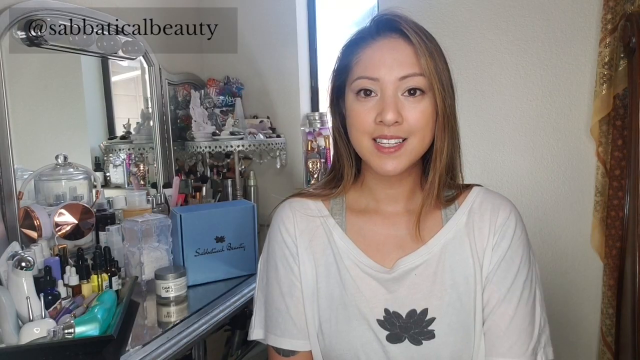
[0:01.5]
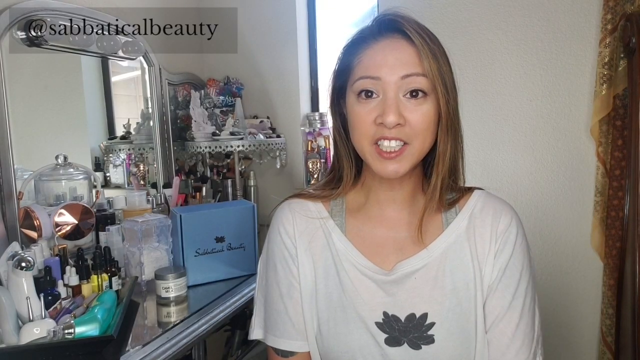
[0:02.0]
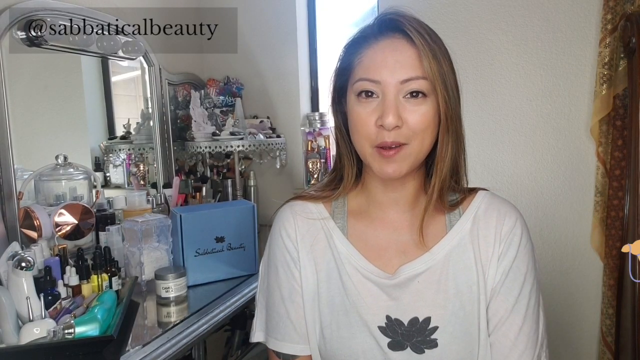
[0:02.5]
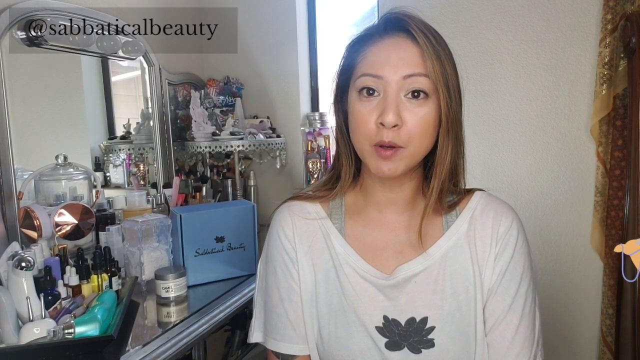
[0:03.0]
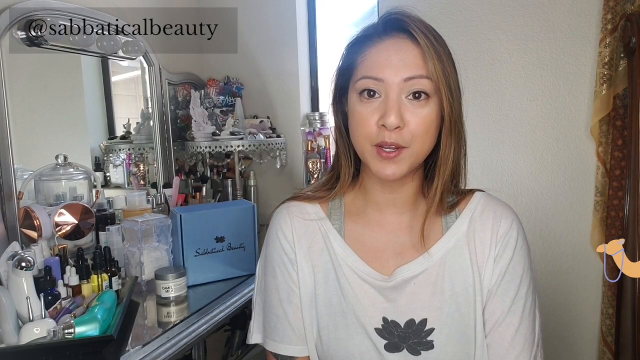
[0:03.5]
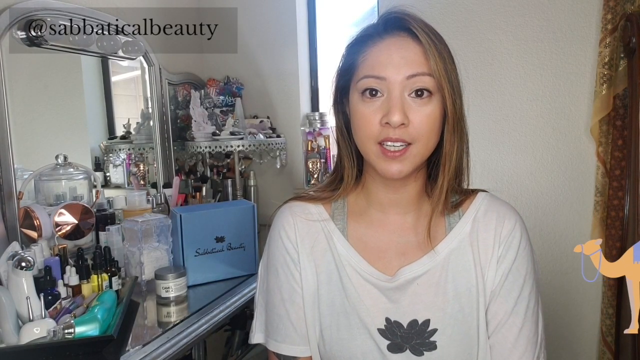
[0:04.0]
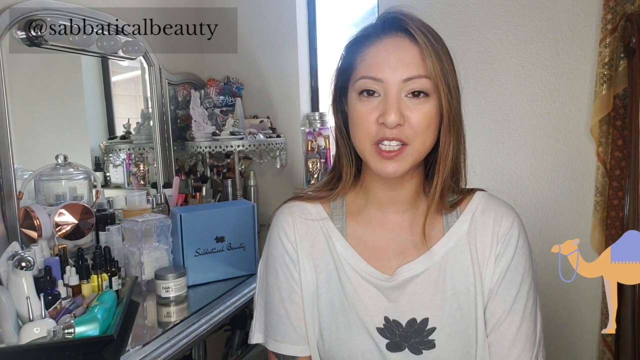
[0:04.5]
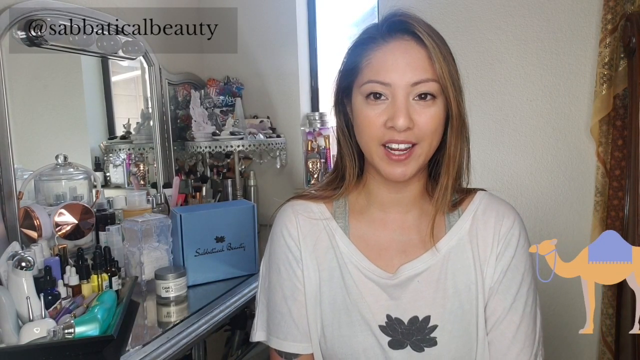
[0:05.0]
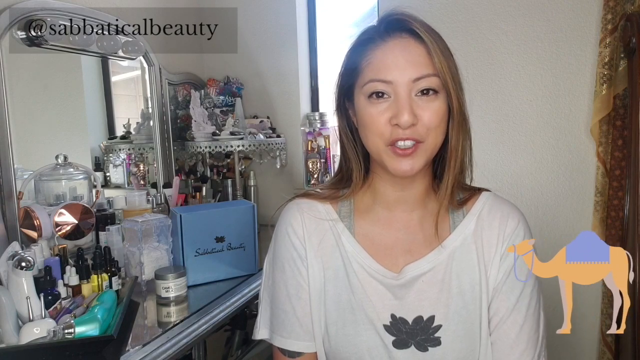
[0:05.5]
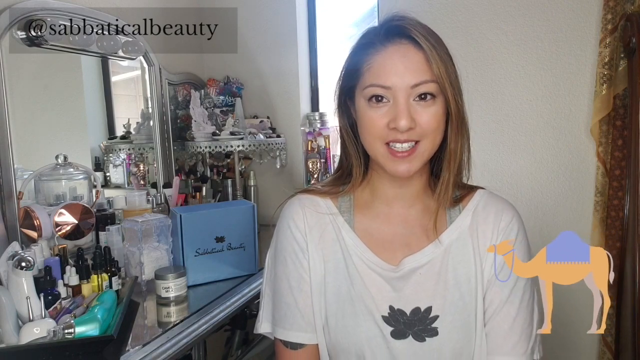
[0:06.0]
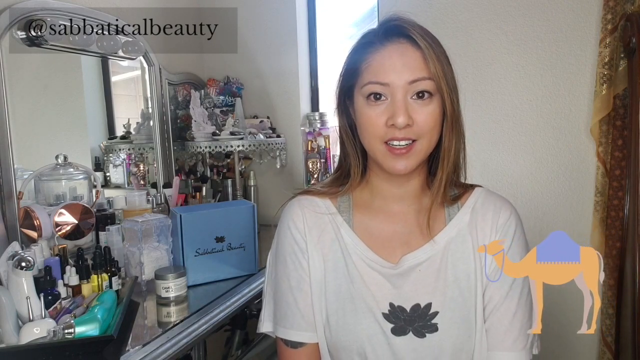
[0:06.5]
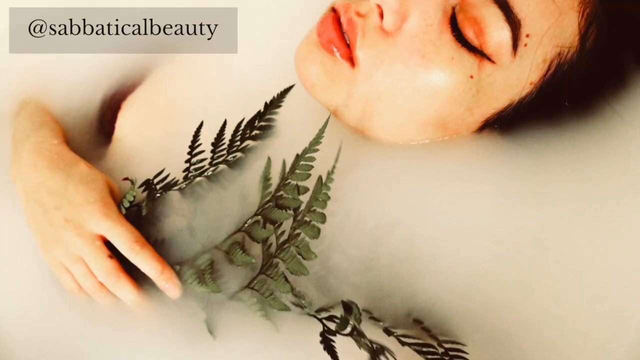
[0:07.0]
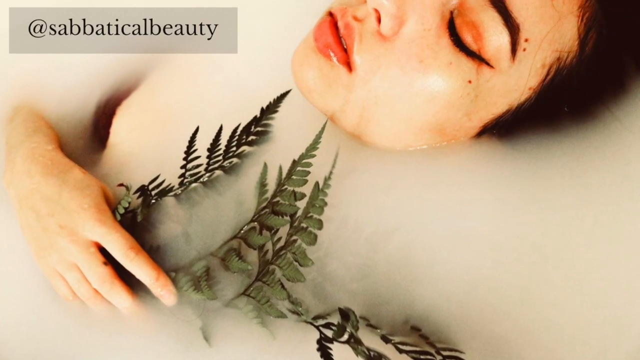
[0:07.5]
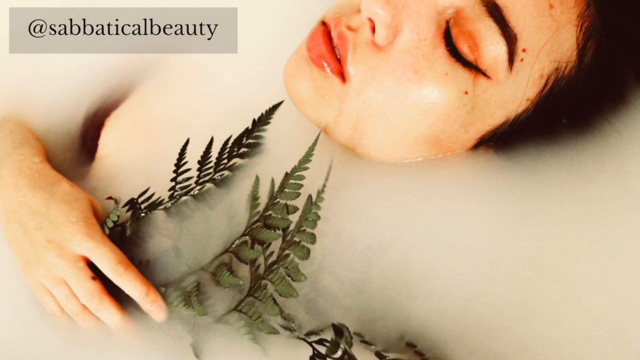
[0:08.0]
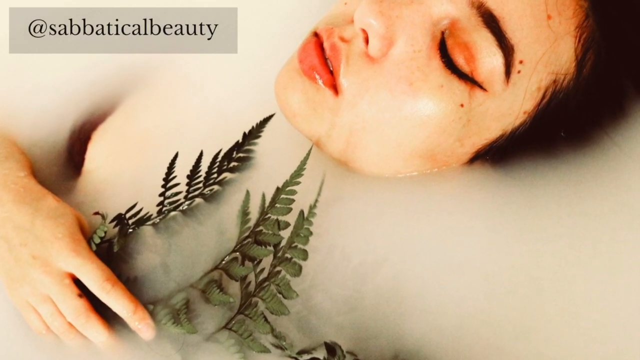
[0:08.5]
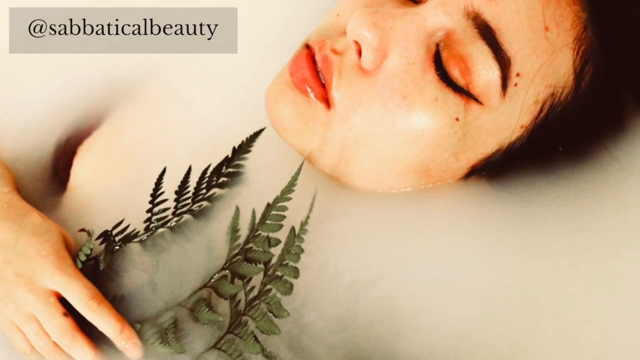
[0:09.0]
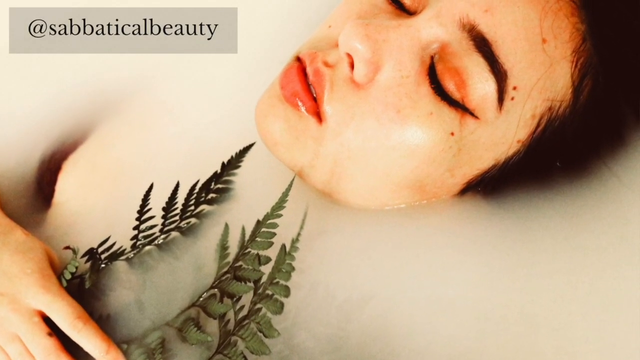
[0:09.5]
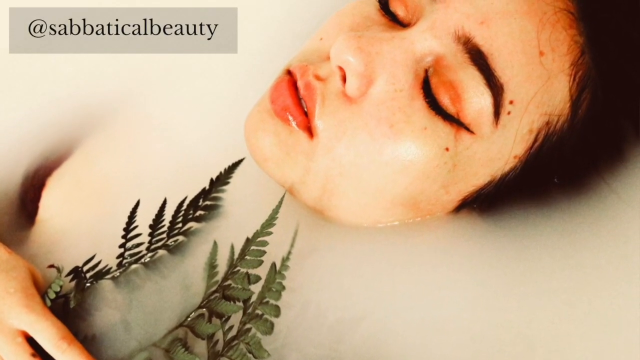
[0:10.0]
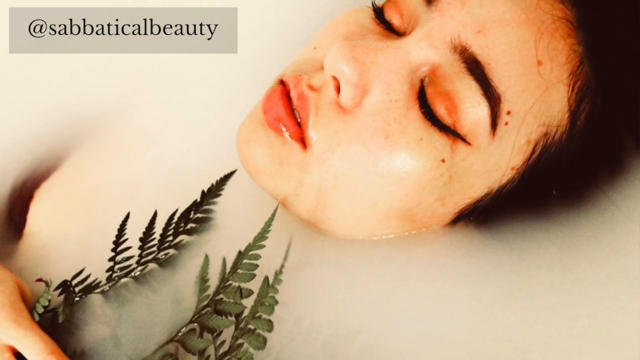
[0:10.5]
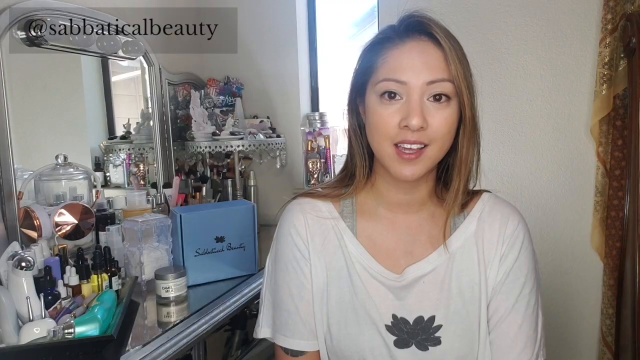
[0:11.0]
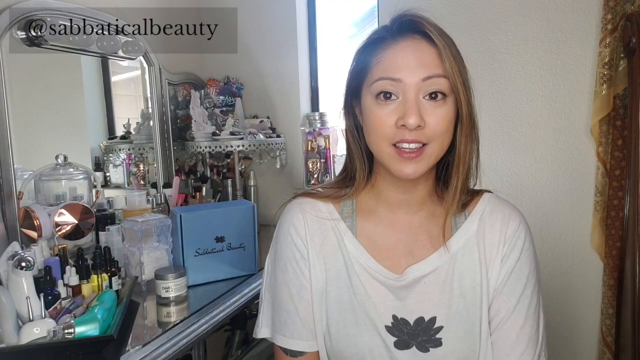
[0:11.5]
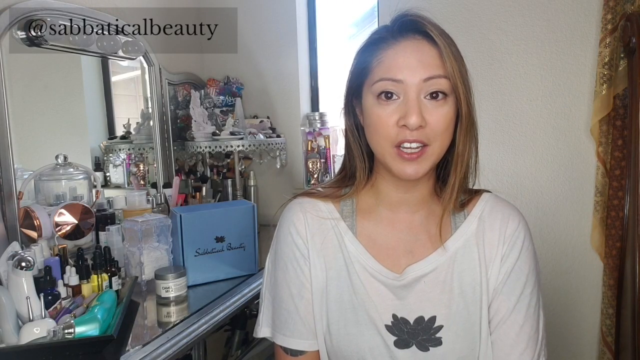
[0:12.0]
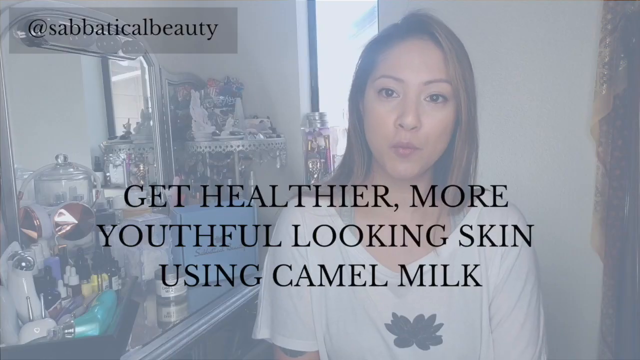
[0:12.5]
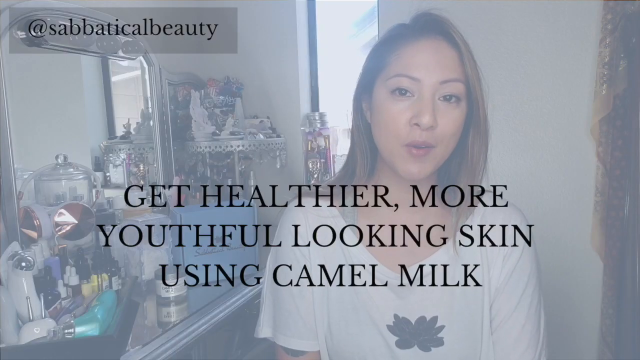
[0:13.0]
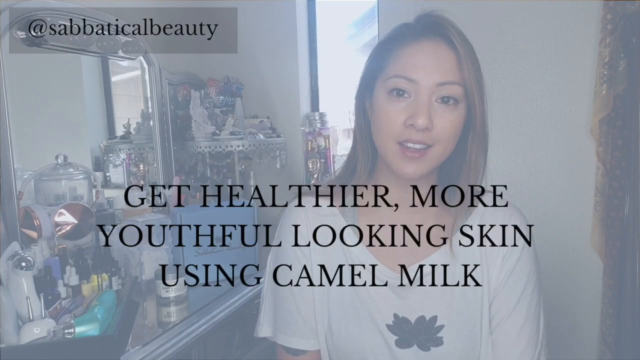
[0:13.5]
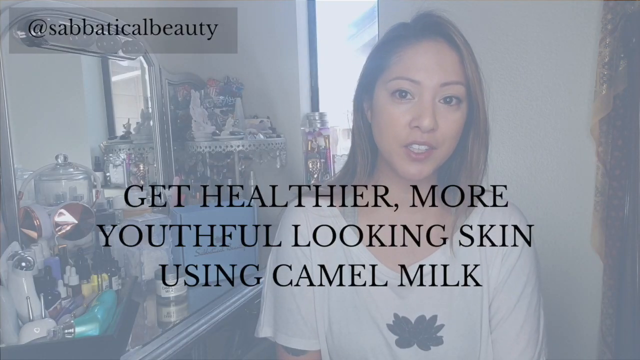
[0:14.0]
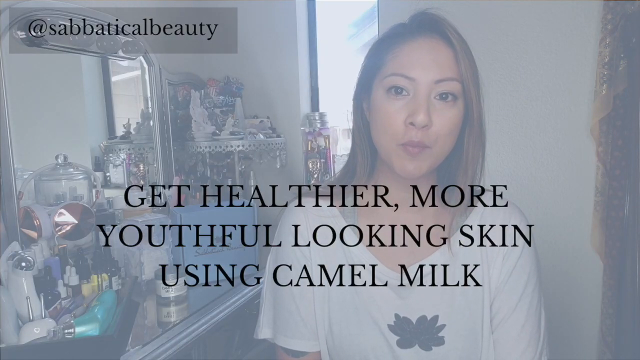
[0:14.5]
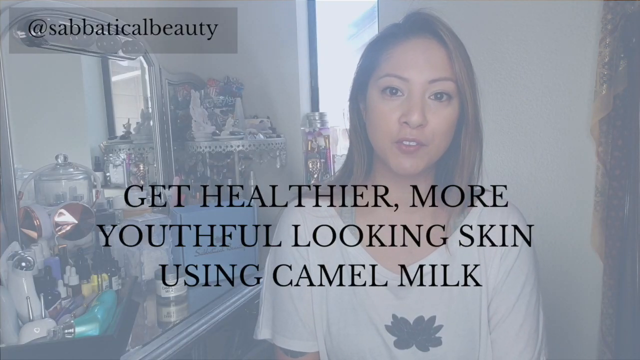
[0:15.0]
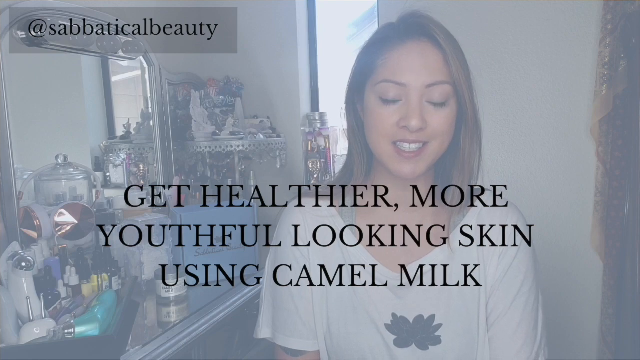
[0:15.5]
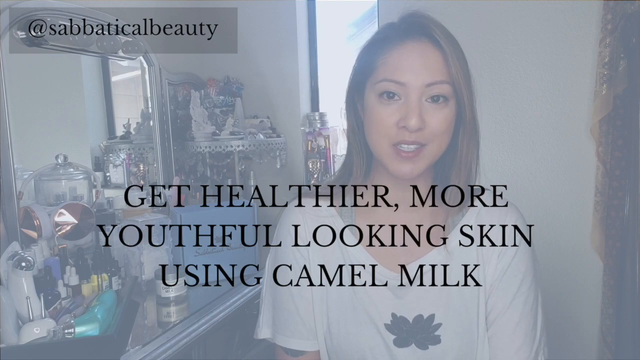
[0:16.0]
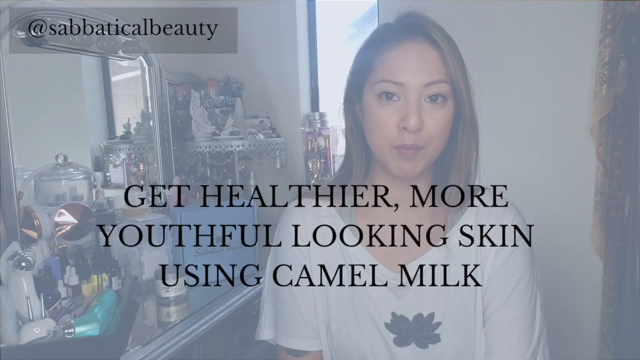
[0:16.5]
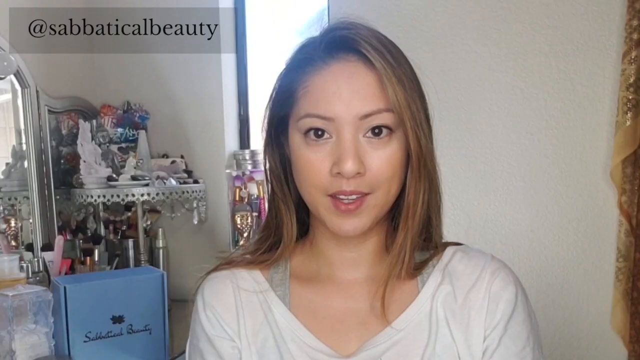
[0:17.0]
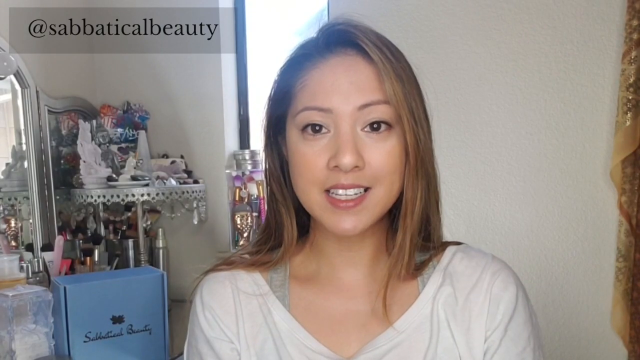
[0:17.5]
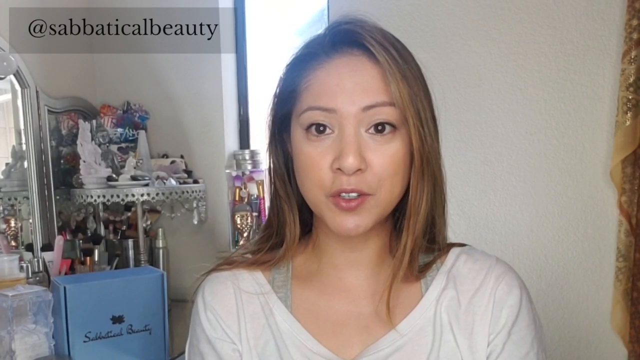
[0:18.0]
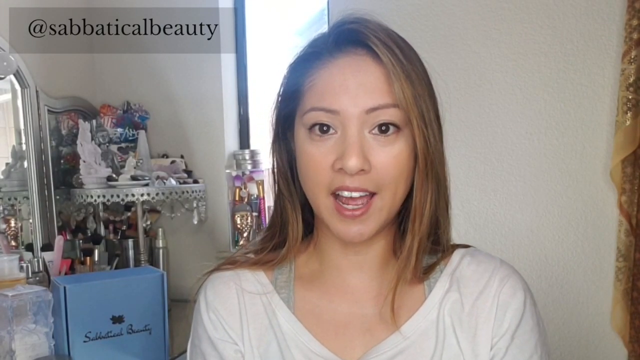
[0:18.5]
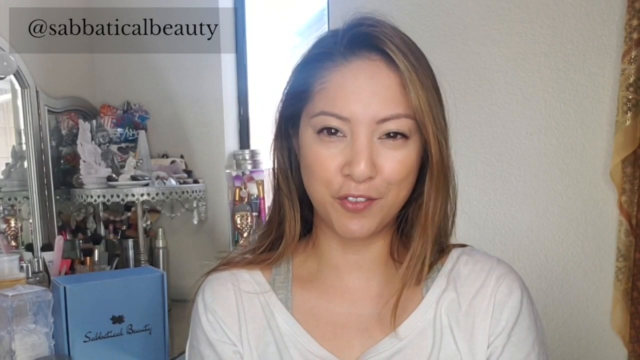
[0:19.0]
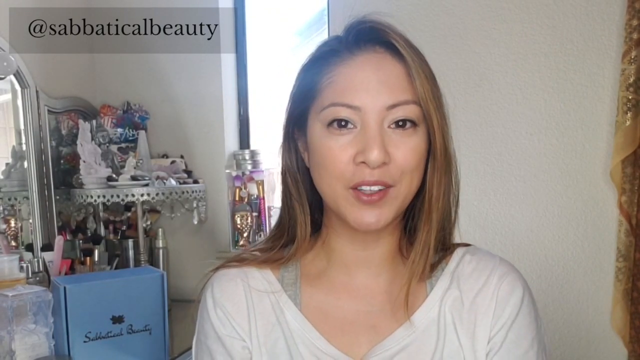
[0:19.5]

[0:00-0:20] A woman with brown hair stands inside a house, talking. The background looks neat and cream-white, with a lot of things that look like herbs. She wears a white t-shirt, and an emoji appears at her side. The video also shows someone inside creamy water, with leaves right beside her. Text reads "get healthier more youthful looking skin using camel milk". The video is an advertisement for camel milk; the woman seems to enjoy what she is talking about, and an image of a camel appears while she talks.